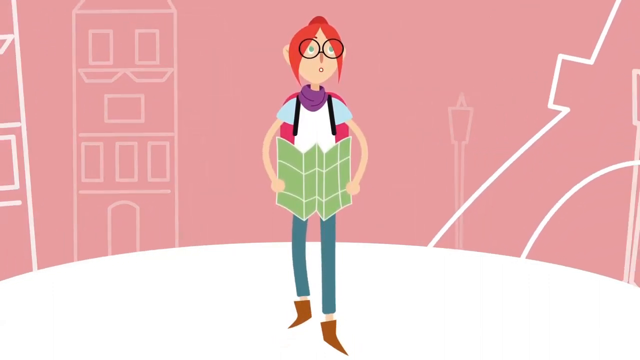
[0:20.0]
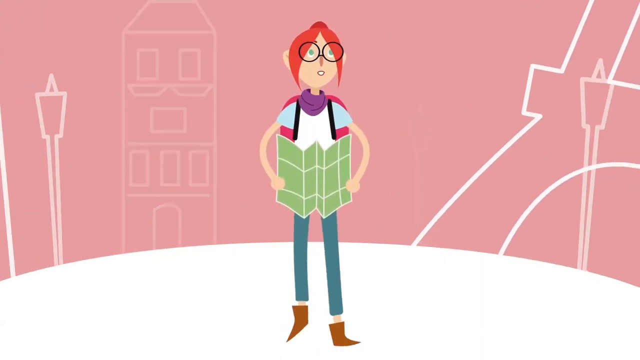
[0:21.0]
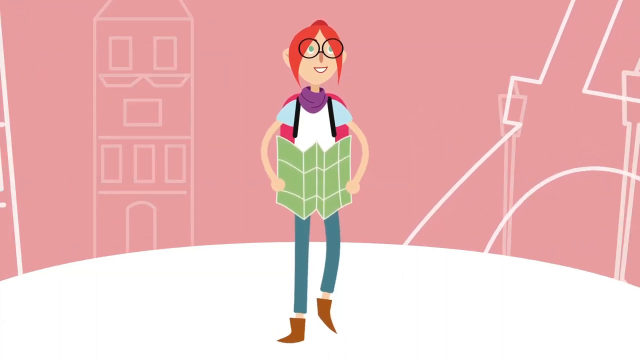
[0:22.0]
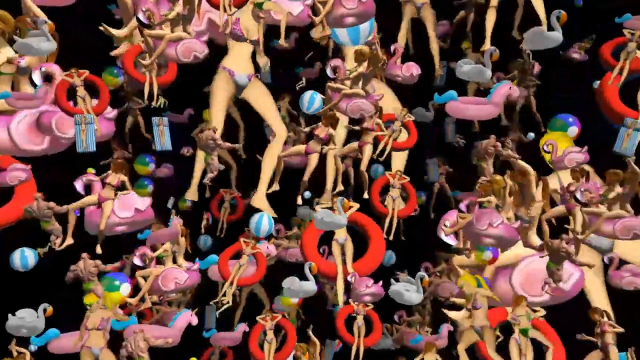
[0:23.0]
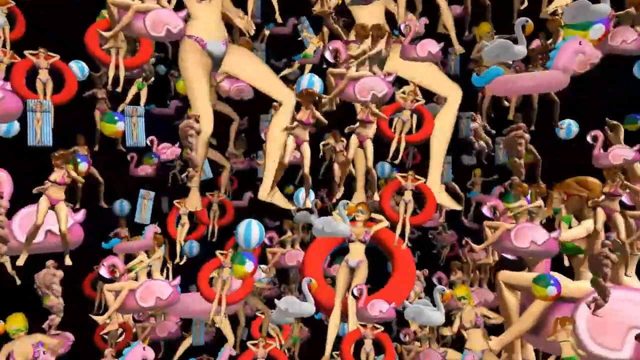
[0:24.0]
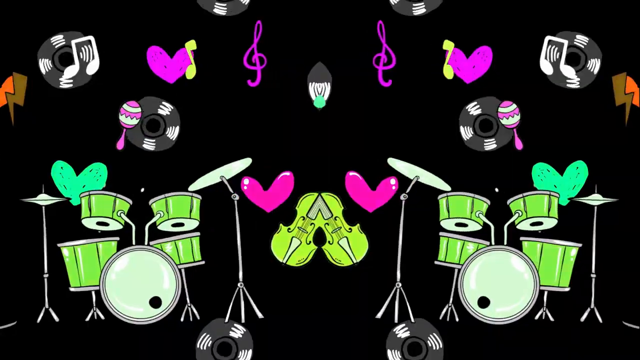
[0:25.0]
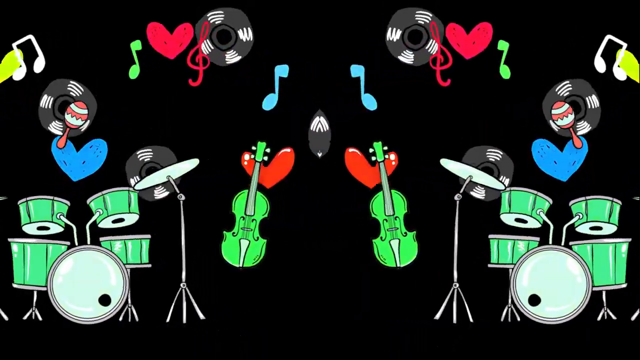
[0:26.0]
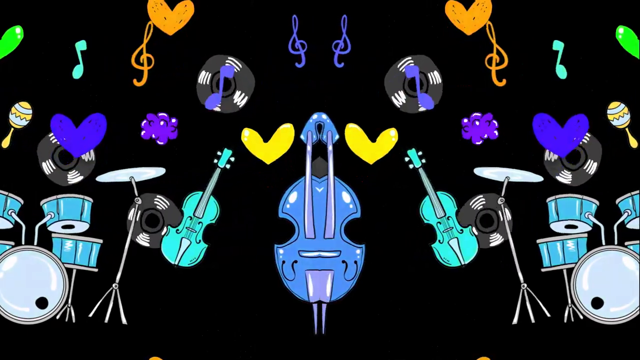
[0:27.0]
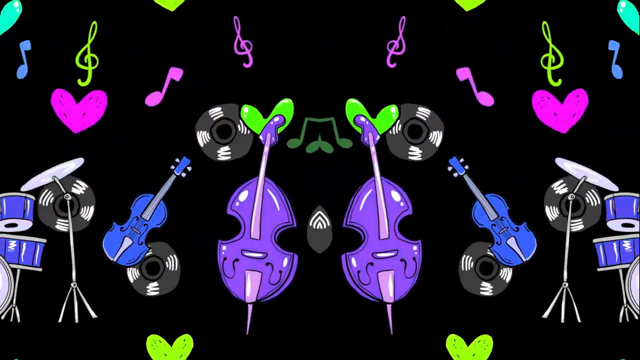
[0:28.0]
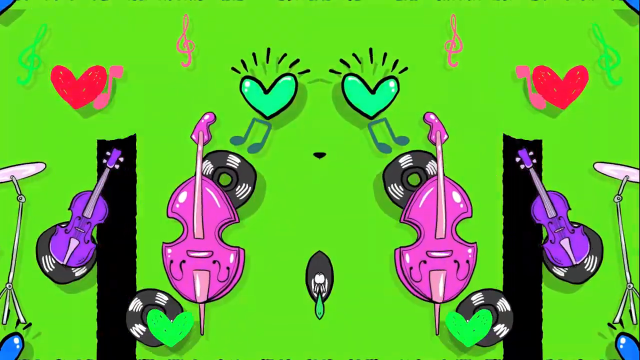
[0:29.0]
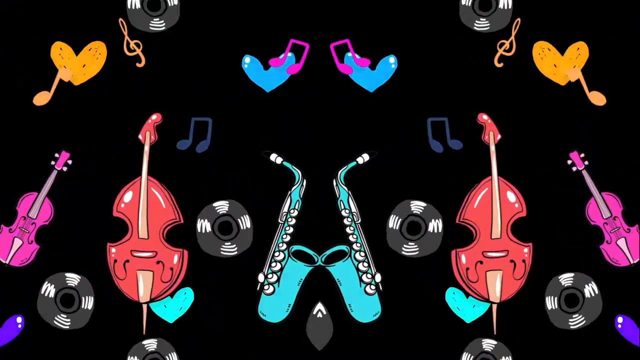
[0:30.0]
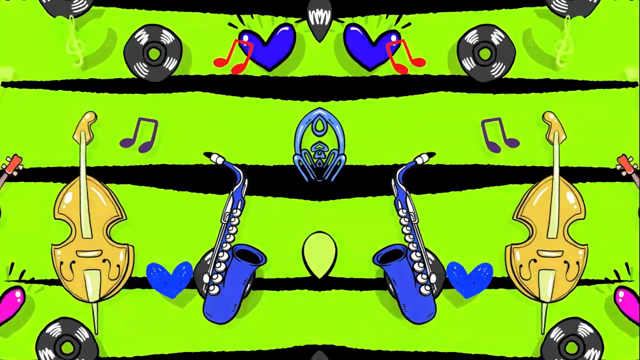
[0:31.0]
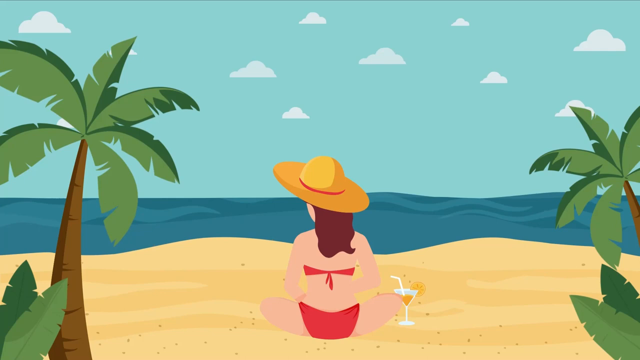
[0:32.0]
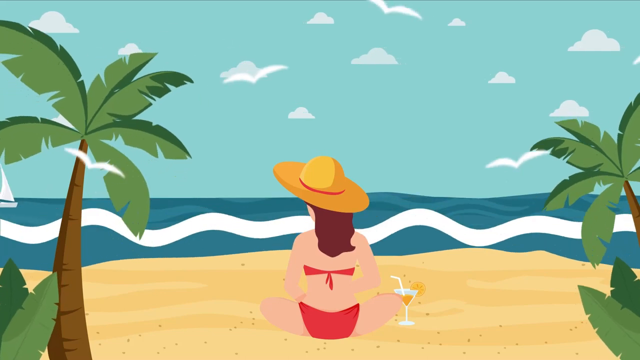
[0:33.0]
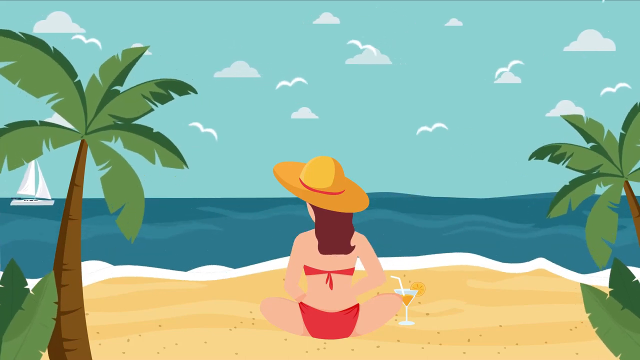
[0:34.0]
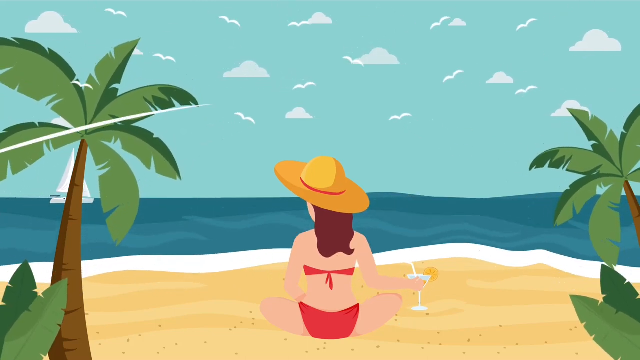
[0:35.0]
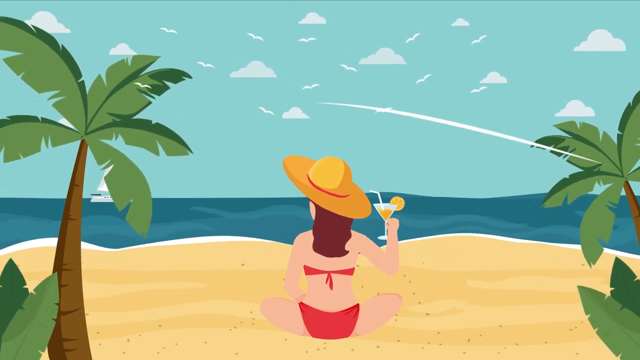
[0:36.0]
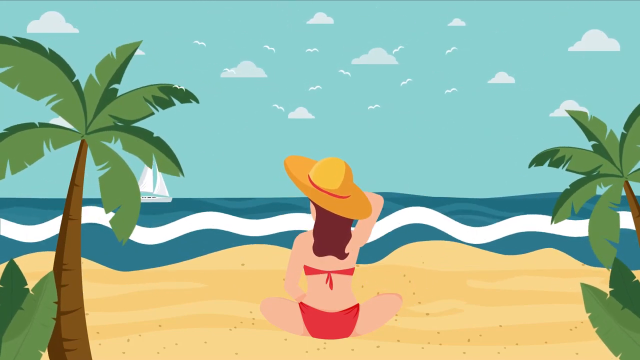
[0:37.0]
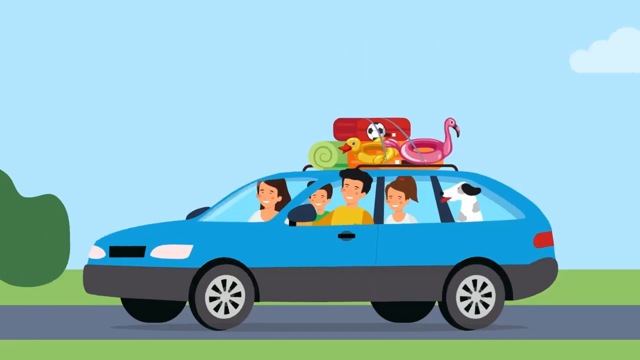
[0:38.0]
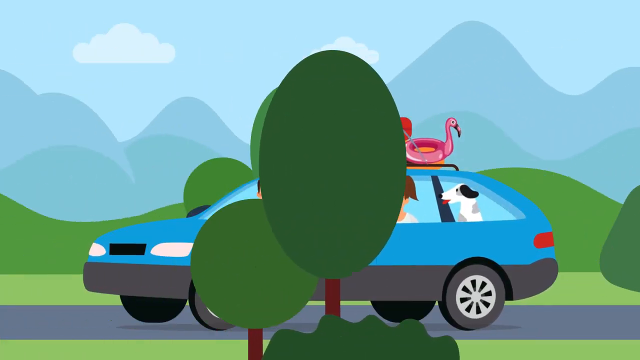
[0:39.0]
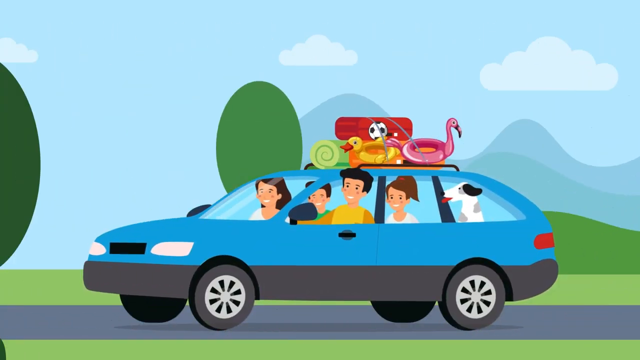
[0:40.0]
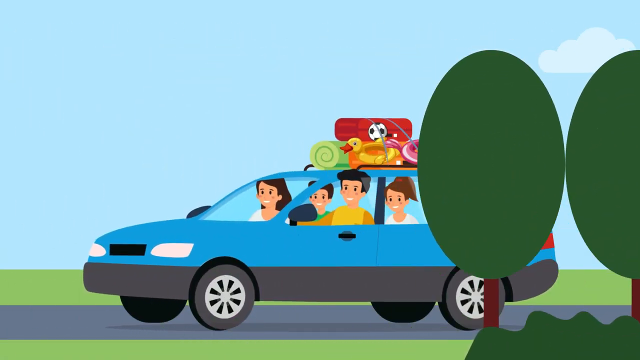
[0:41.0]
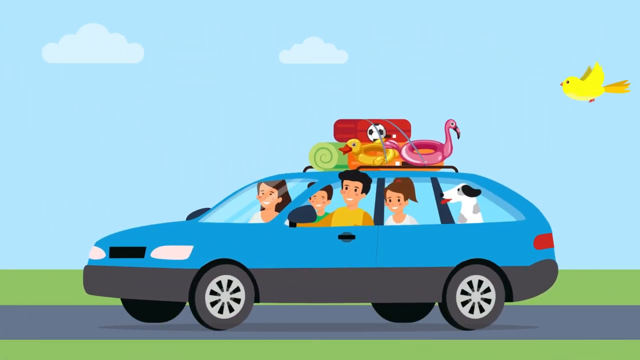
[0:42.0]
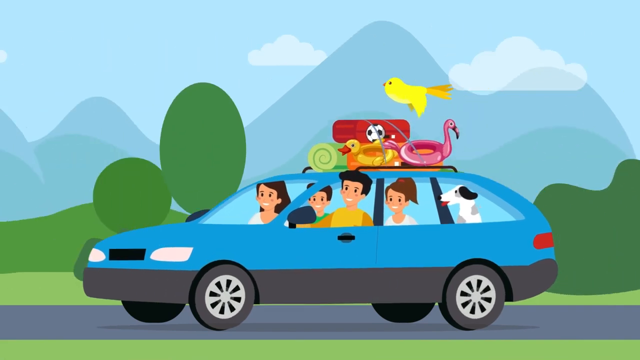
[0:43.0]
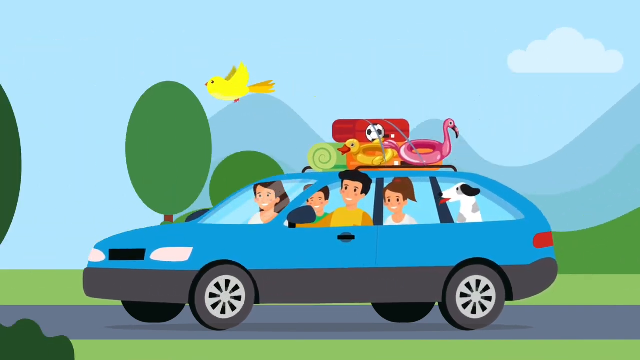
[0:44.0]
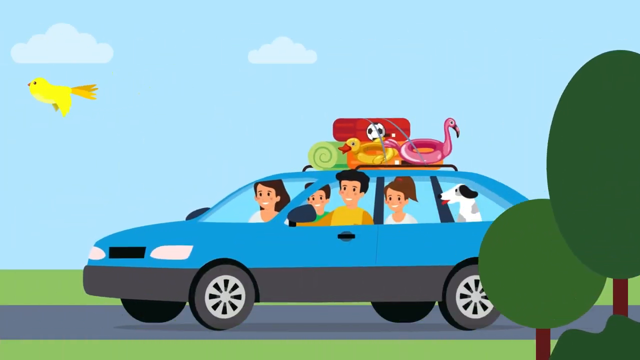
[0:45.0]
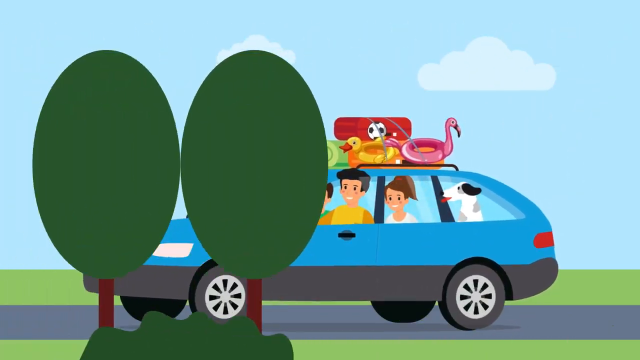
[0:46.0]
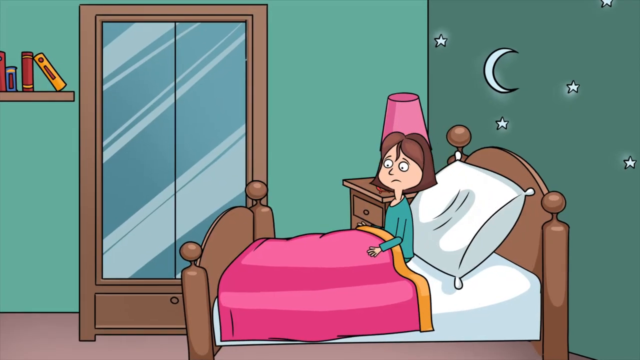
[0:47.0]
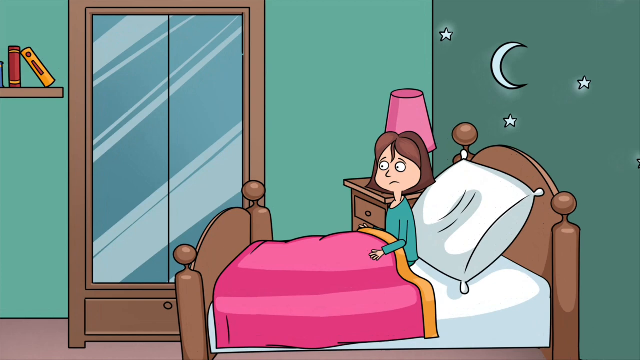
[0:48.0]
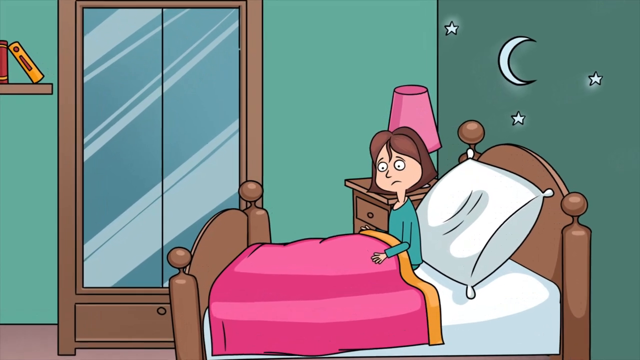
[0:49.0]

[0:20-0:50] The same girl walks in the city with a backpack on, holding a map, and looks like she is looking around trying to find different places in the city. The scene transitions to a chaotic scene full of dolls, like Barbie dolls, floating on inner tubes, along with headless men dolls; they all look like they are wearing bikinis or bathing suits, men and women, though mostly women. Beach balls, swans and other pool floats are in the background, all over the screen, and they sort of move around. The image changes to two drum sets that appear to be mirror images of each other. In the very center is a violin split into two attached violins, one the mirror image of the other. Each drum set has four drums, a bass or kicker drum, a top hat and a cymbal. In the background are records, music notes, hearts and a lightning bolt. The items then start moving from the center outward to the right and left, still mirroring each other. The scene transitions to a woman sitting on the sand at the beach with a martini glass, with seagulls flying at the top and waves. Next, a family in a car travels to the left while staying in the center of the screen. Finally, a girl sits up in bed, possibly suggesting the earlier scenes were her dreams.